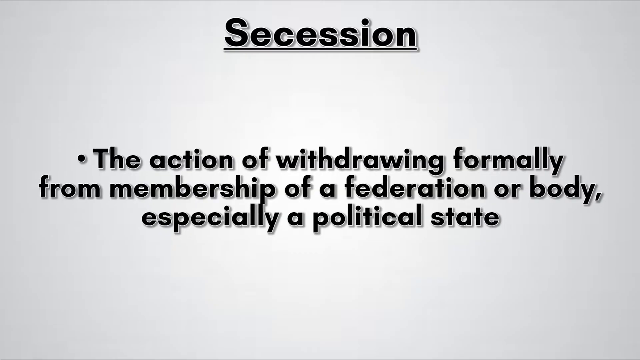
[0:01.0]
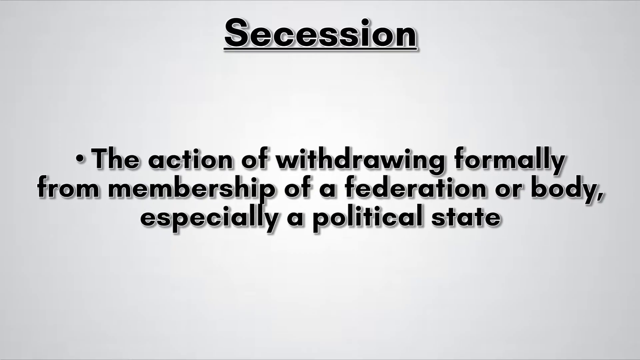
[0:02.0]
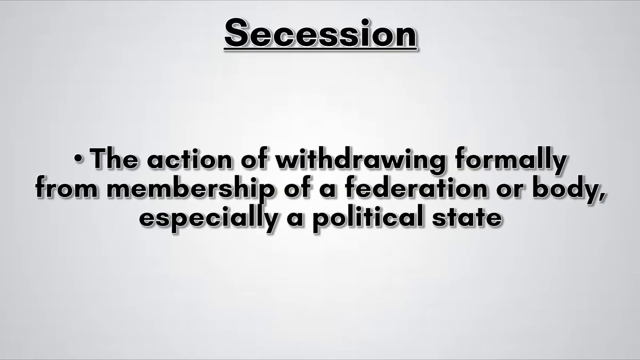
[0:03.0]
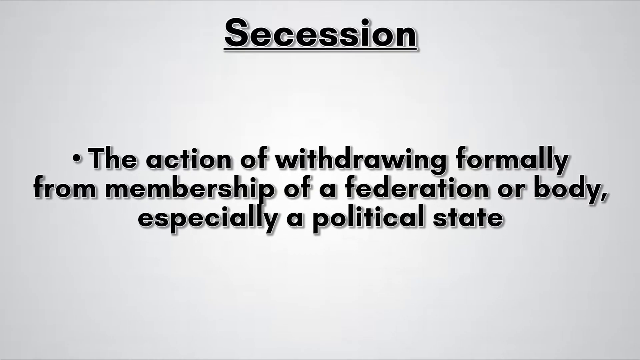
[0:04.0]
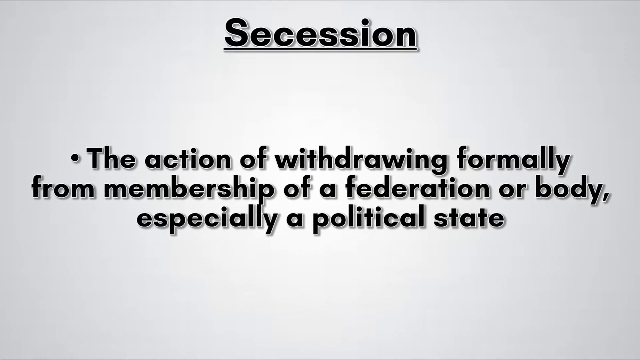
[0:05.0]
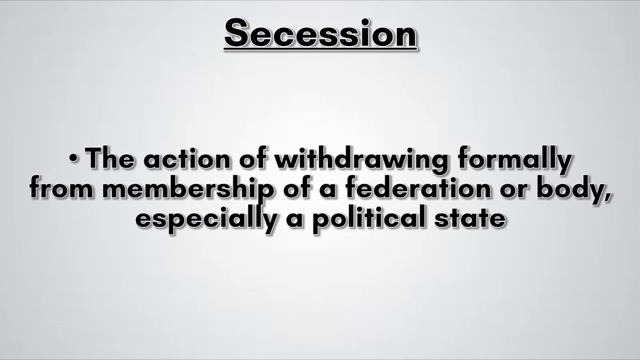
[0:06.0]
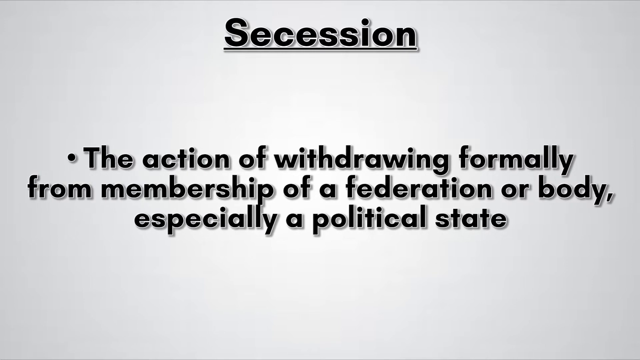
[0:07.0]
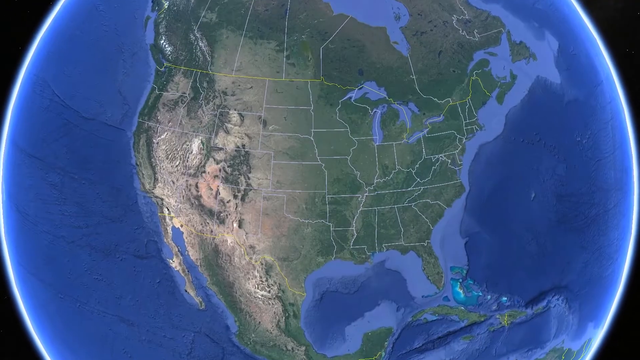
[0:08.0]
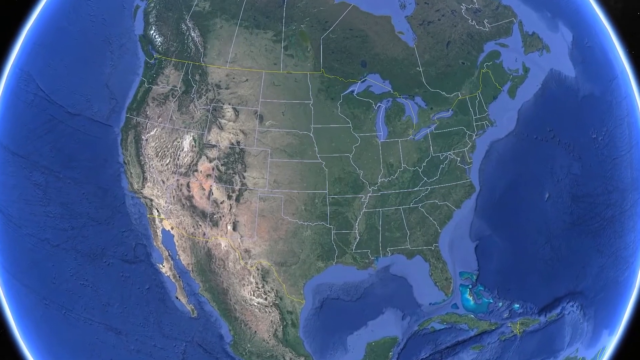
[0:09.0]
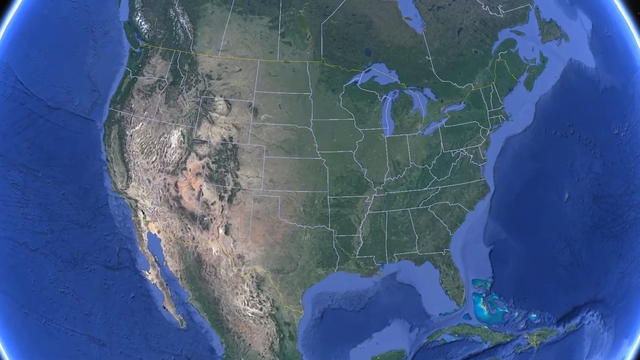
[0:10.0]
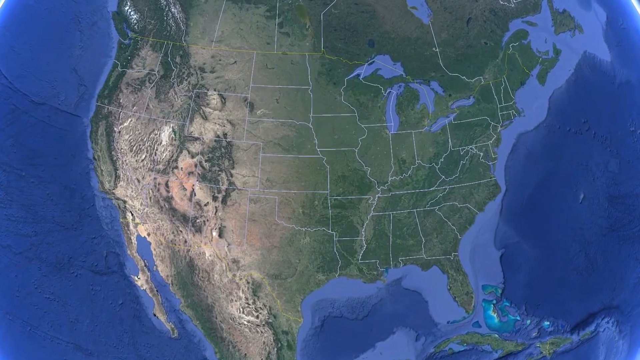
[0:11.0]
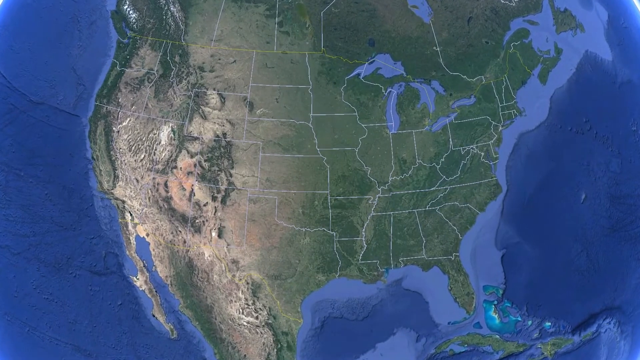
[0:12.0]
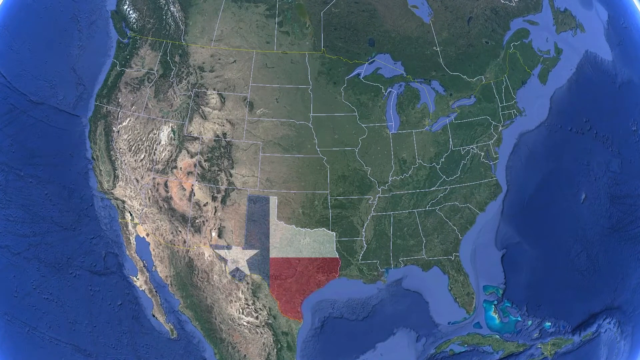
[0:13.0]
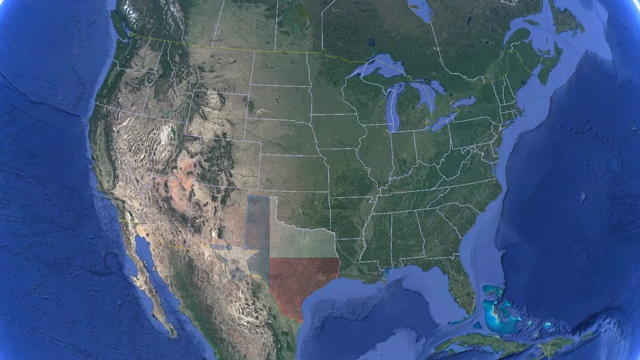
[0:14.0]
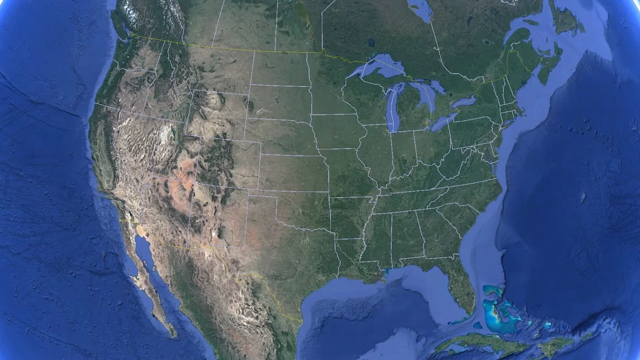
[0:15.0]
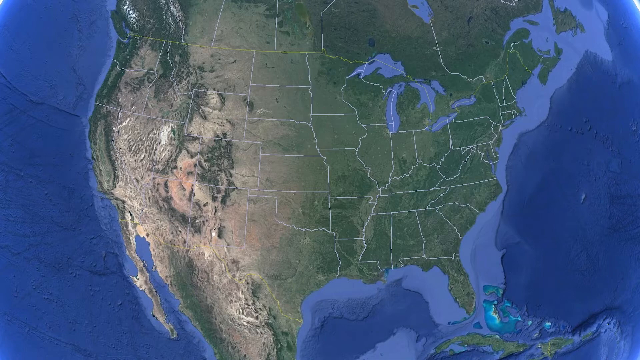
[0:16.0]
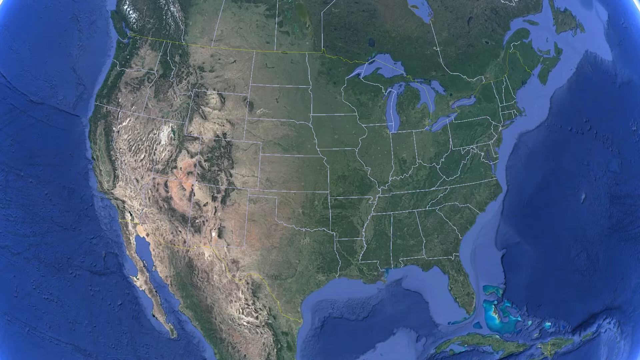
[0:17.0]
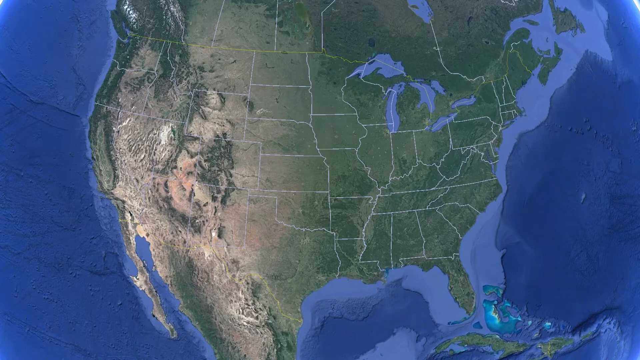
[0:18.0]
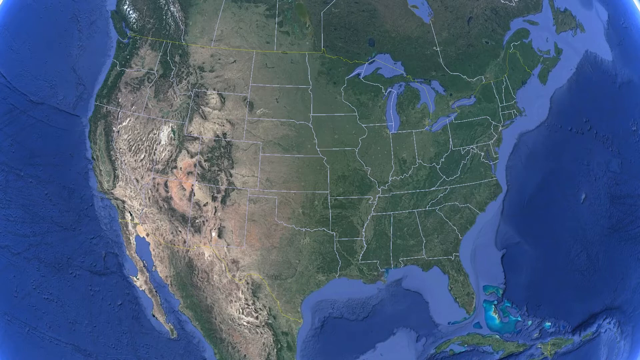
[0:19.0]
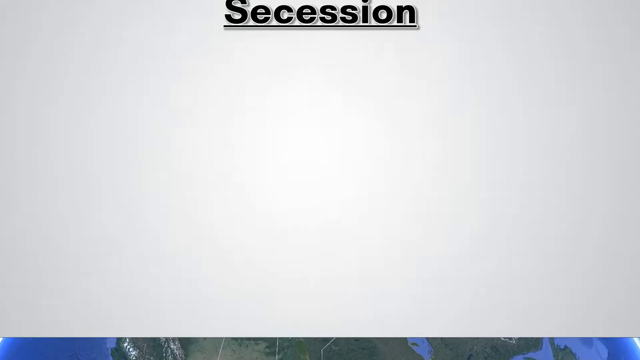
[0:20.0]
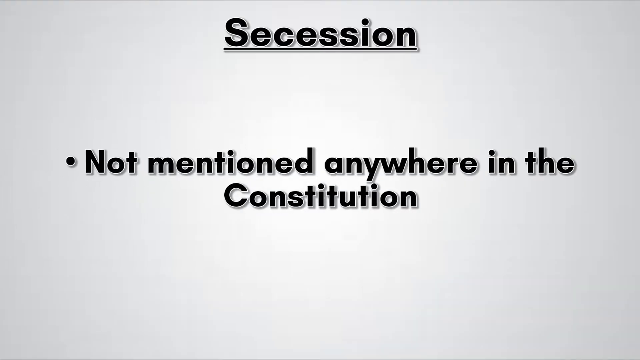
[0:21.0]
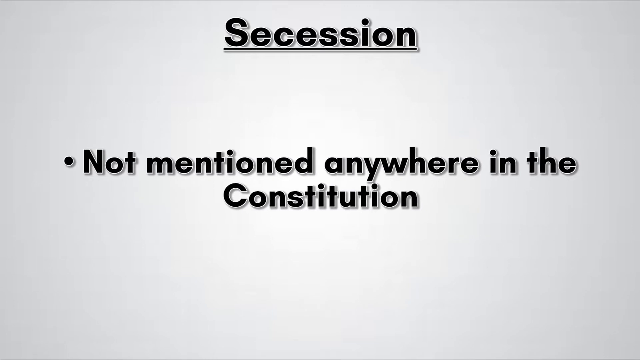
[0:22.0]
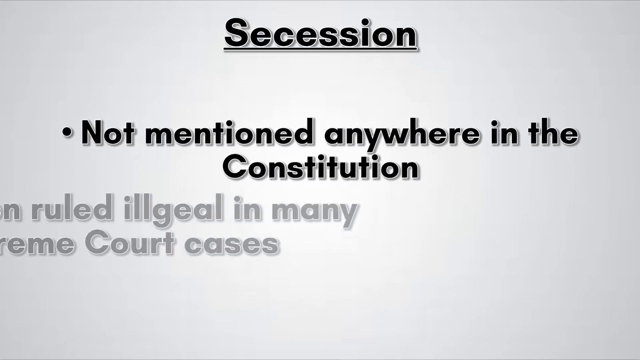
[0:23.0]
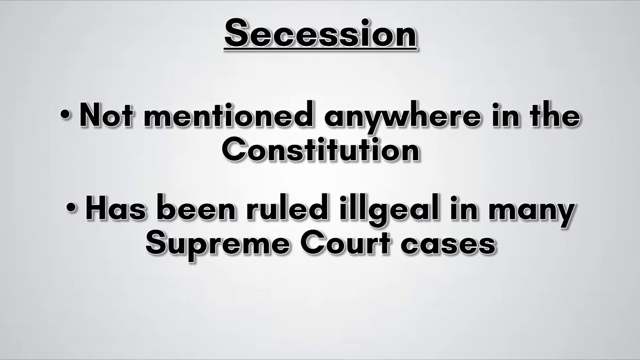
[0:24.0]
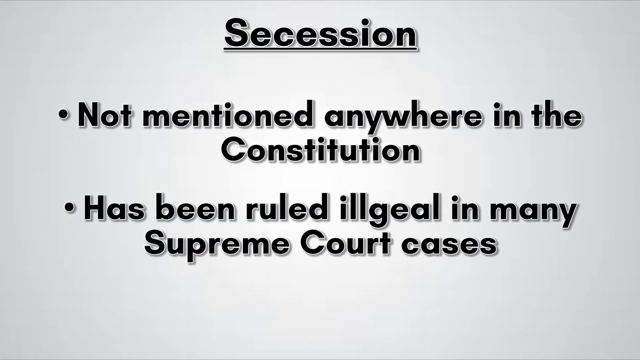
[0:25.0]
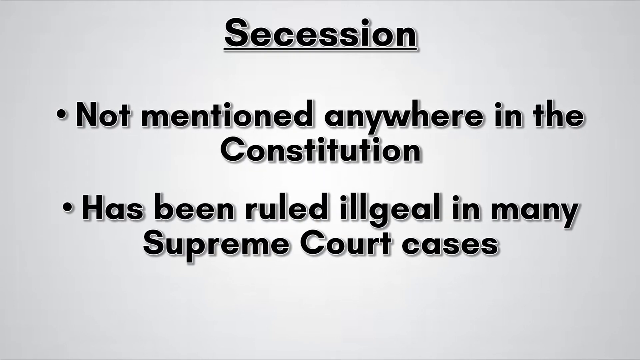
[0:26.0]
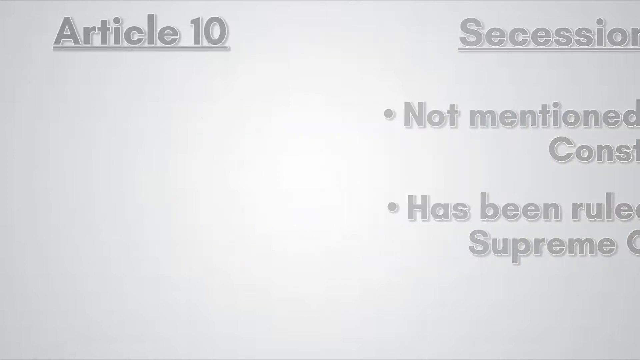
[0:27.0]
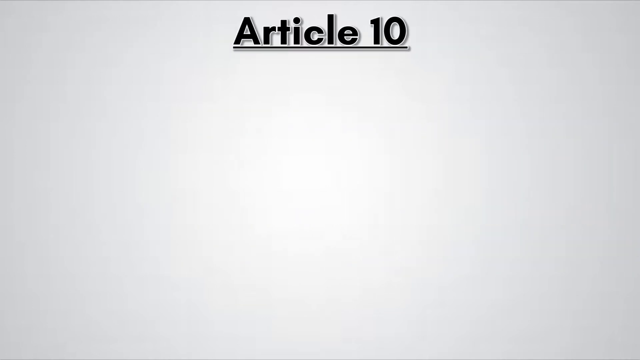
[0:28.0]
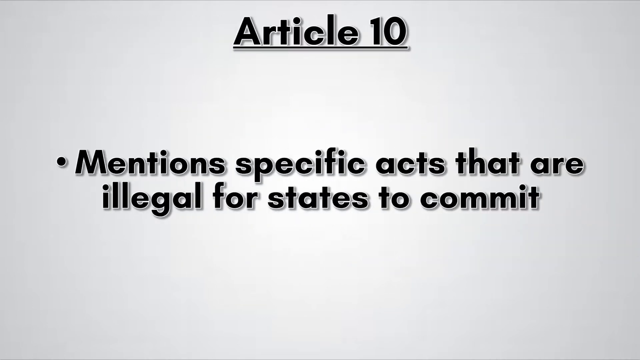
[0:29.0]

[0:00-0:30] The video opens with the text "secession, the action of withdrawing formally from membership of a federation or a body, especially a political state," written in black on a grayish background. It then moves to a map of the globe of planet Earth and goes to the United States of America, showing each state individually while zooming in. Next it goes to Texas and shows an old Texas logo. After that, the secession text returns, stating that secession is not mentioned anywhere in the Constitution, "has been ruled illegal in many Supreme Court cases," and "Article 10 mentions specific acts." The view then fades from the globe, which shows the water in blue, back out to a view from outer space as it zooms back off into space, with a live video from the astronauts' point of view.